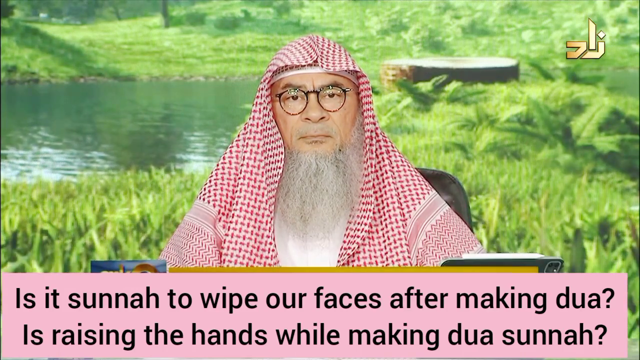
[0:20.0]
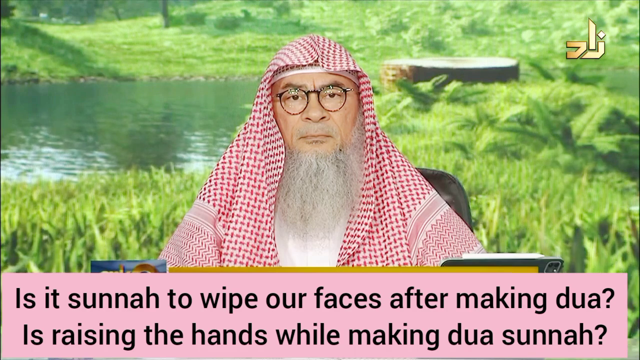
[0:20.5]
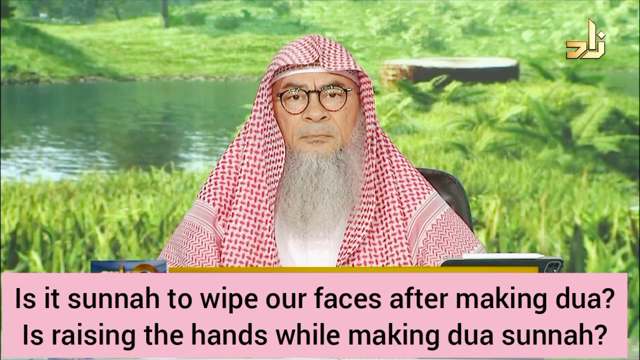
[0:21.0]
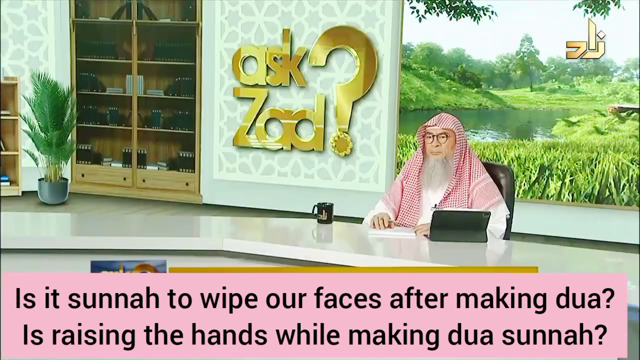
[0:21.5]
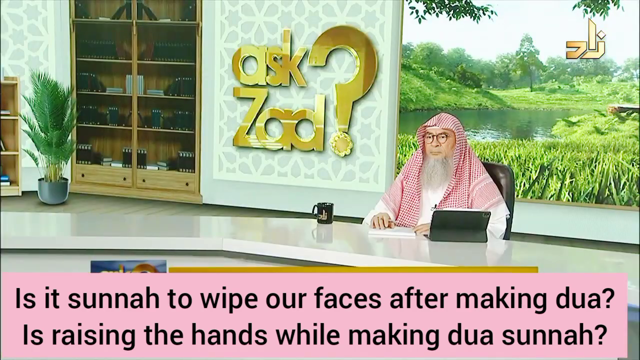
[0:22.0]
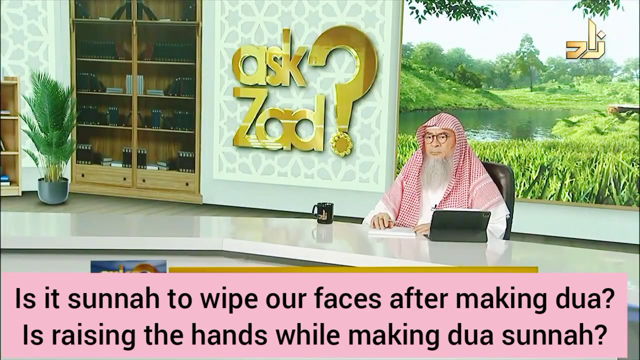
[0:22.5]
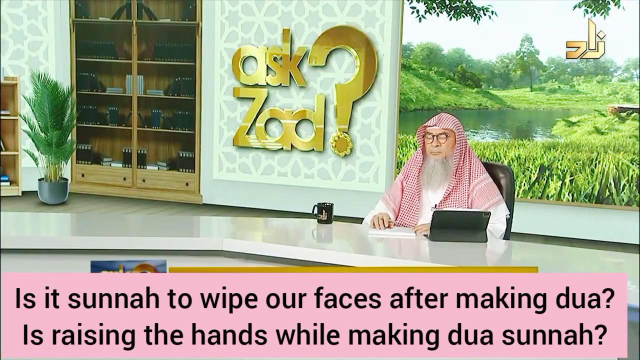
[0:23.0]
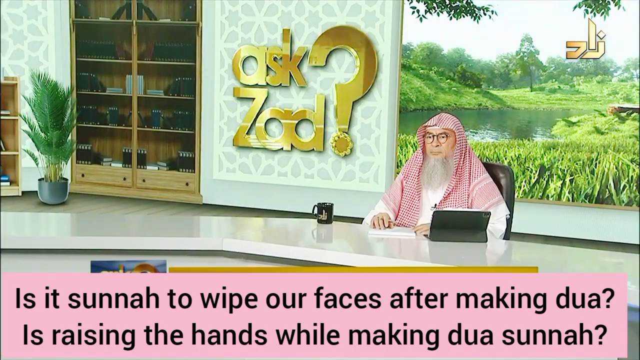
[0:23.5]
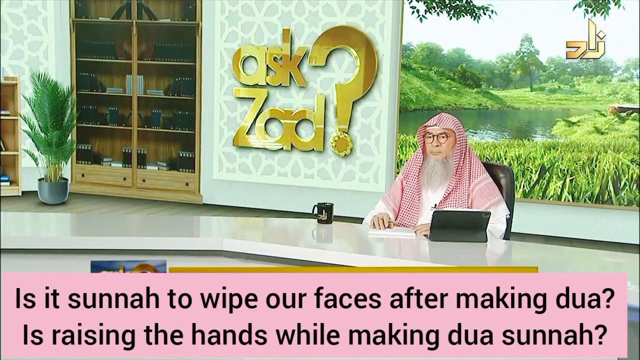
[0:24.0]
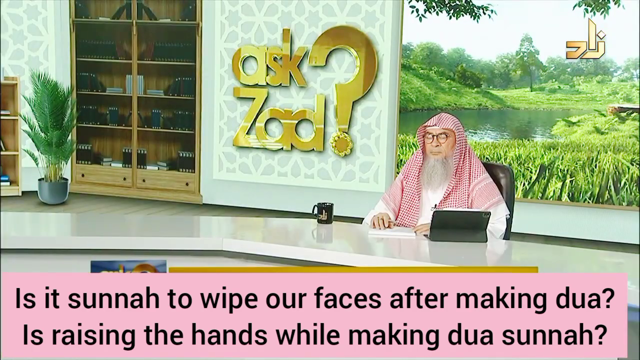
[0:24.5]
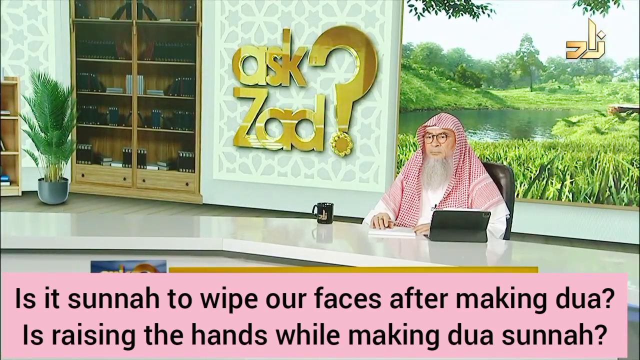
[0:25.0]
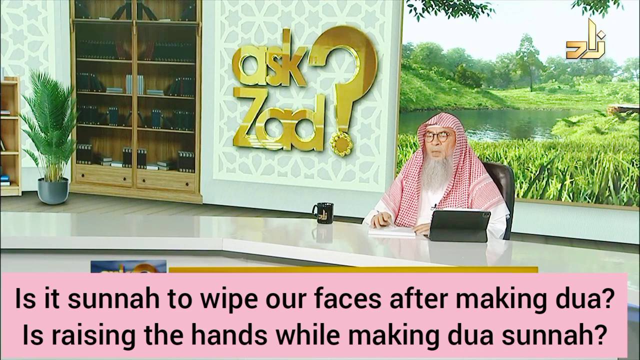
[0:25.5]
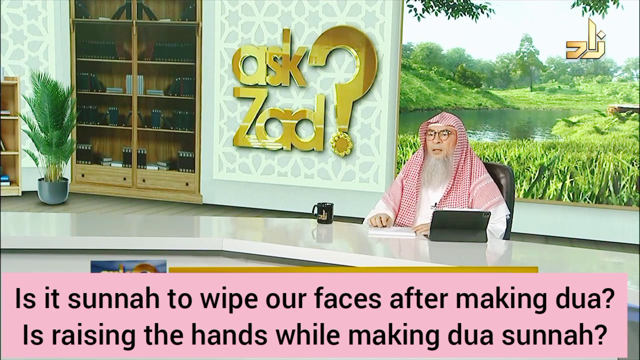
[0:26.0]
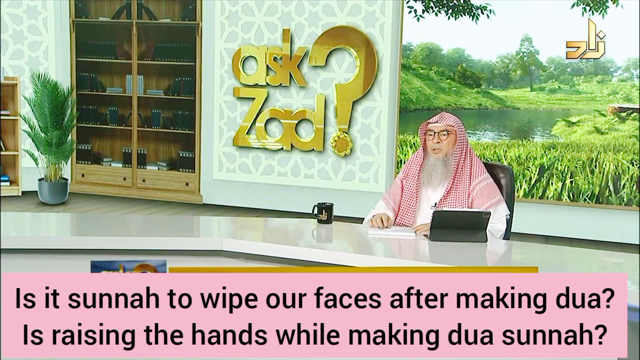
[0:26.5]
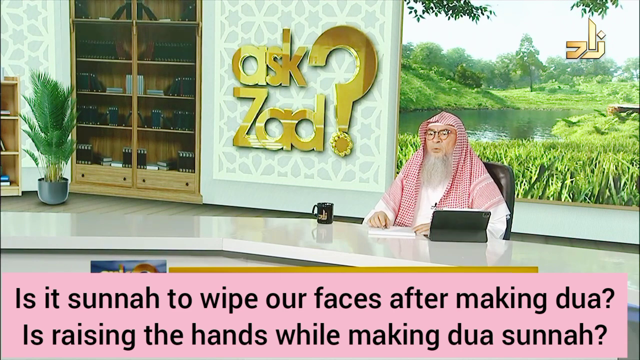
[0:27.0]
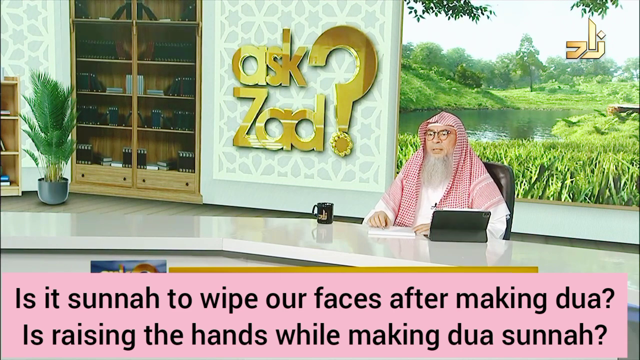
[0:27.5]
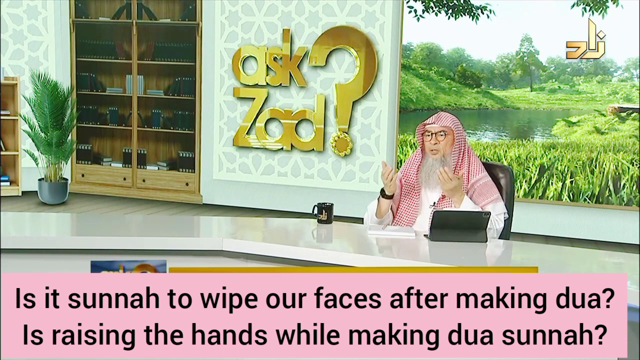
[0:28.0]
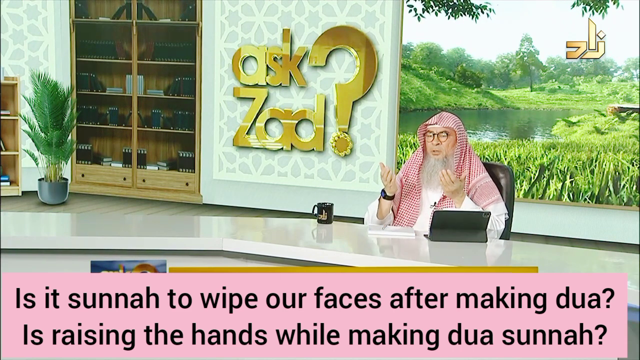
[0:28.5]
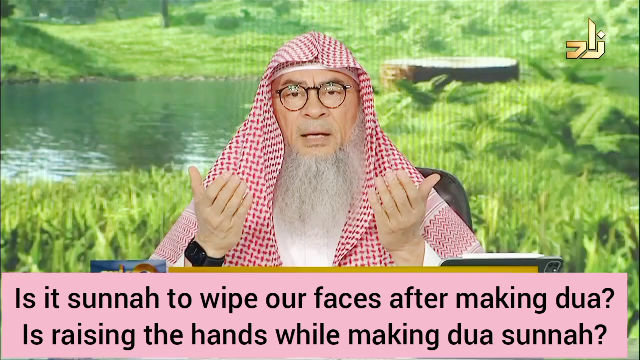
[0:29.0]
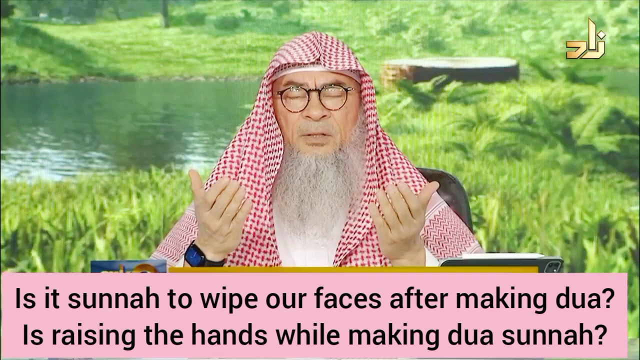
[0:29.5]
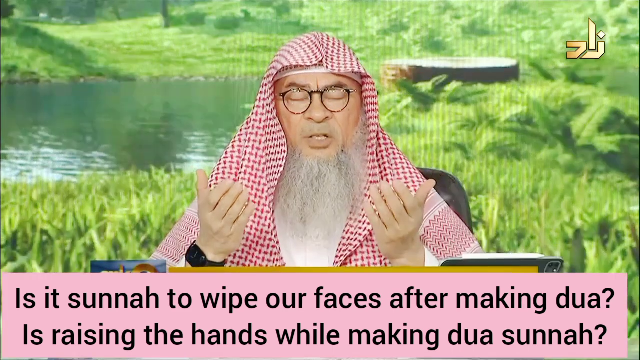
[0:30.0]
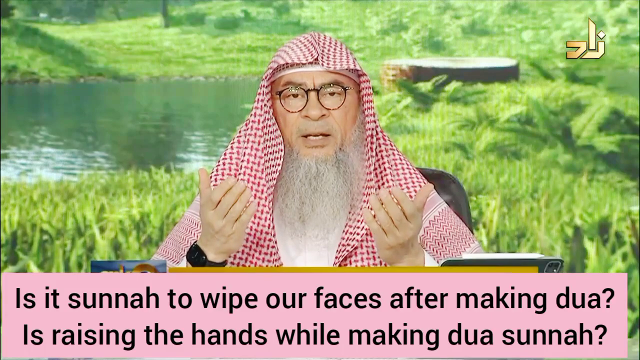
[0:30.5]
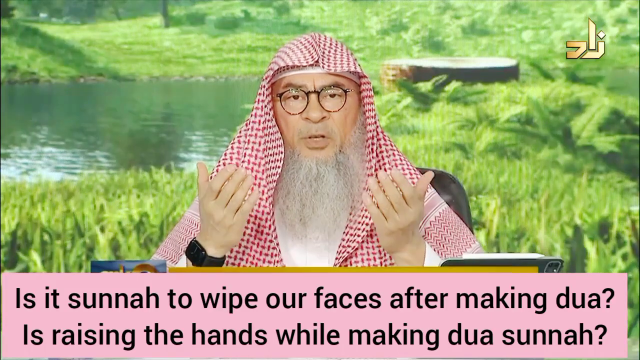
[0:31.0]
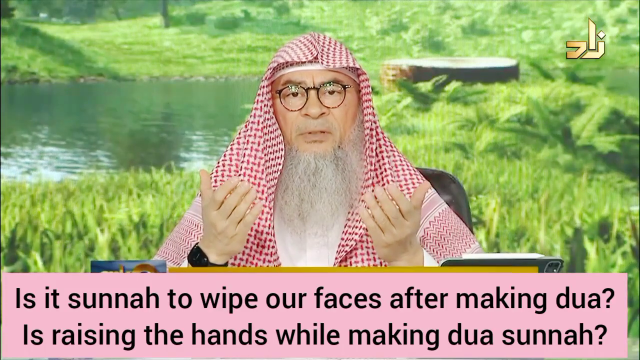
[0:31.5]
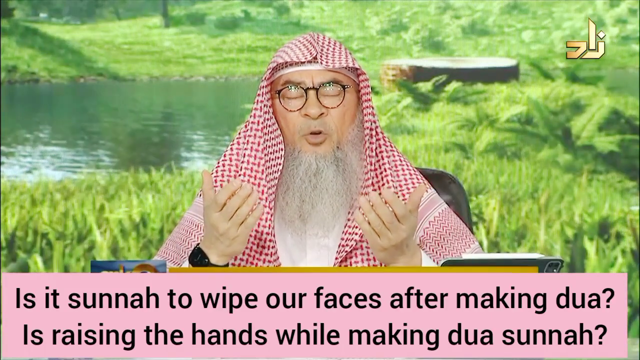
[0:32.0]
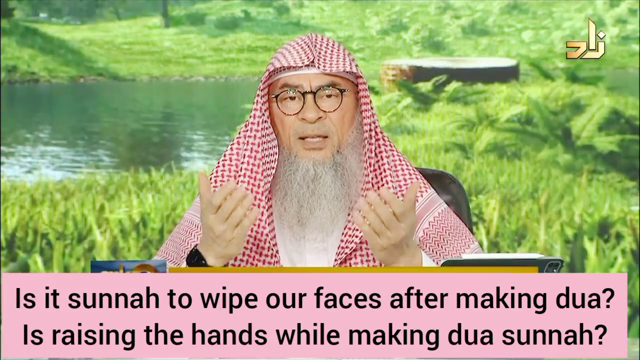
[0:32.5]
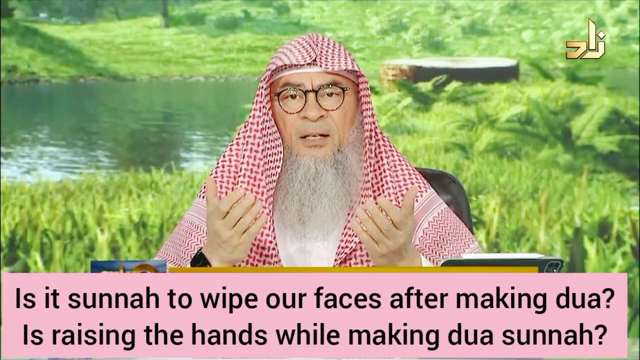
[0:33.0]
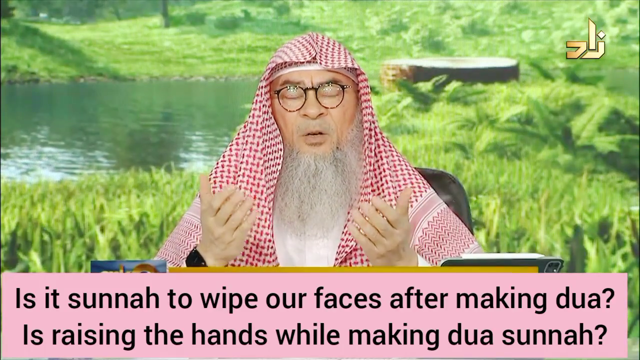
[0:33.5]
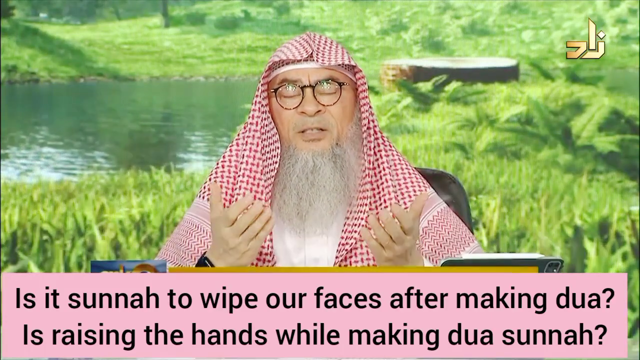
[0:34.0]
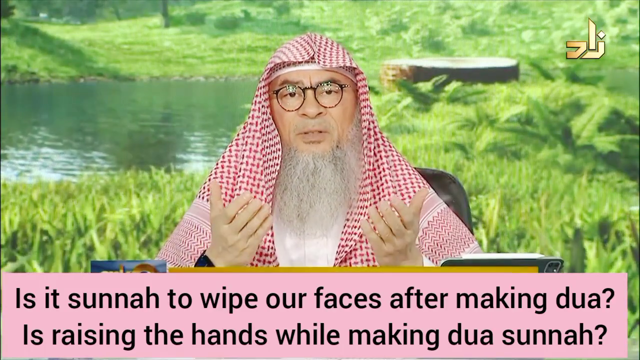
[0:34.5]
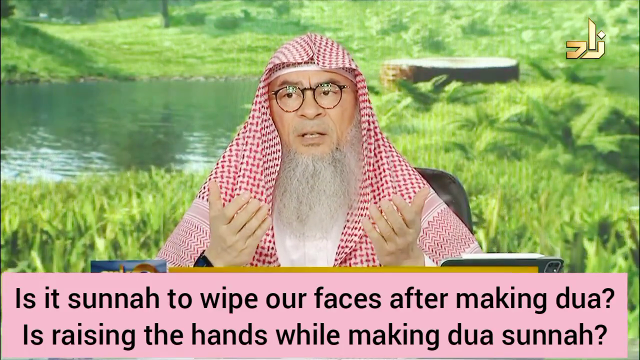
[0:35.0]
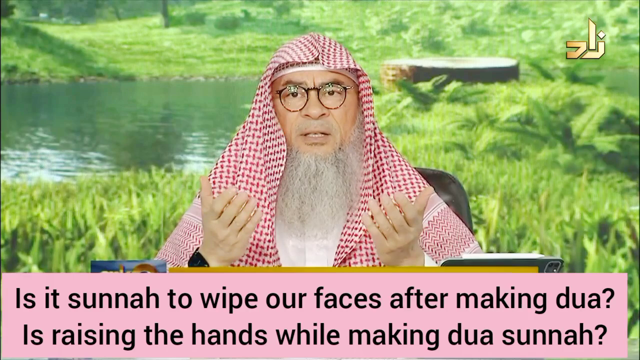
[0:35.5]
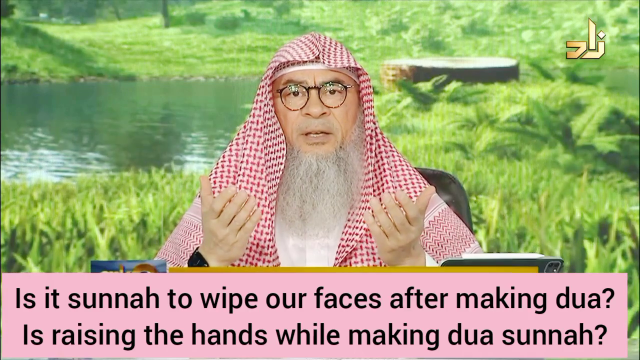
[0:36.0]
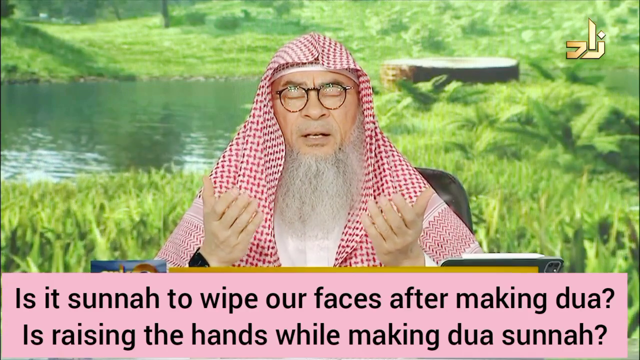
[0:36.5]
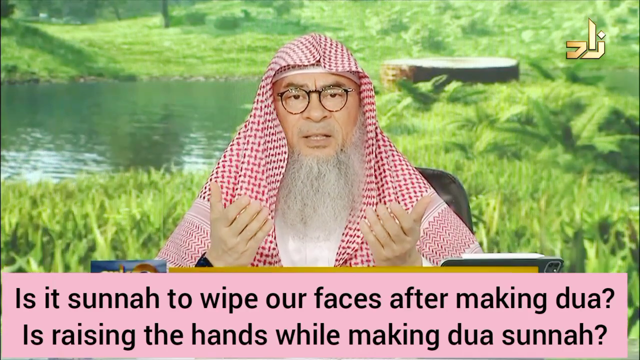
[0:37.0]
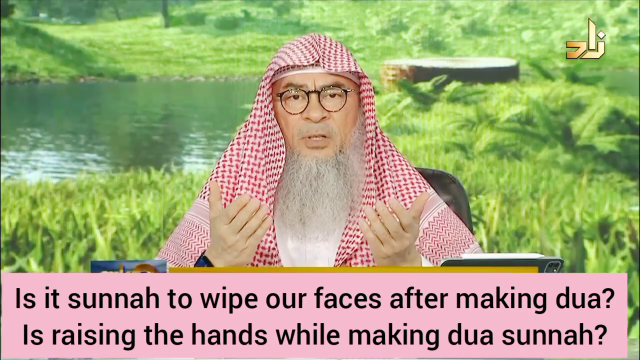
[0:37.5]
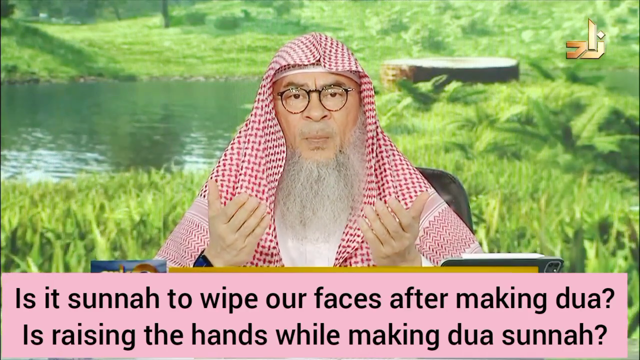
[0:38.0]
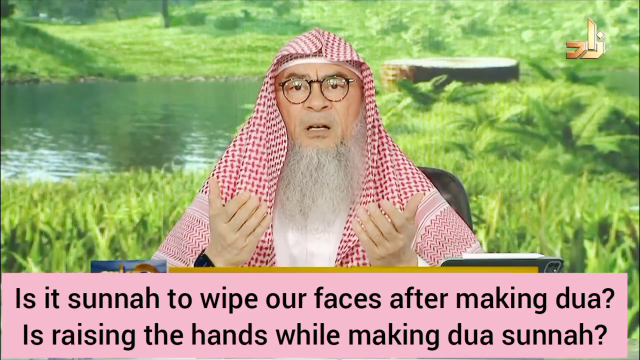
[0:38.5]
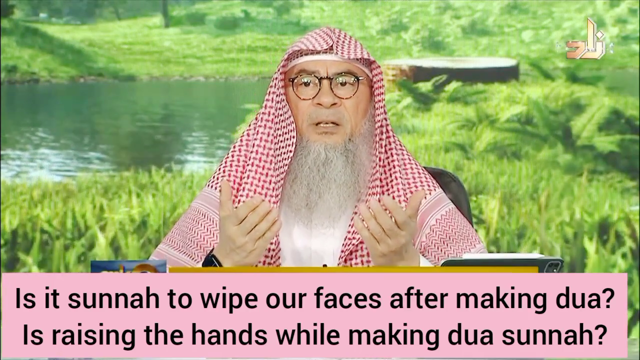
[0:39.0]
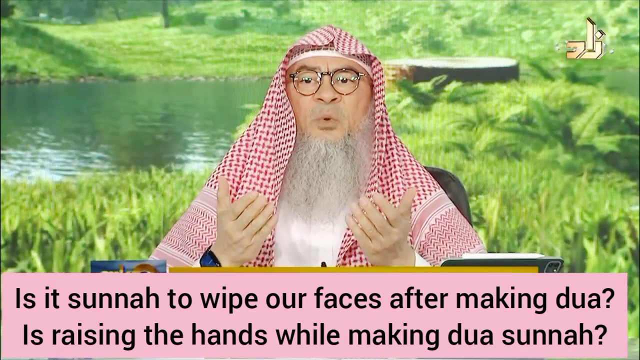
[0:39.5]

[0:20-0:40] The same gentleman appears with his background in a close-up shot, then the video cuts to what looks like a television studio. In a cutaway to the left, text in a gold font apparently reads "Ask ZAD" with a big question mark. More of the text from the bottom of the screen is visible while he talks: "to wipe our faces after making DUA" and "is raising the hands while making DUA sunnah."